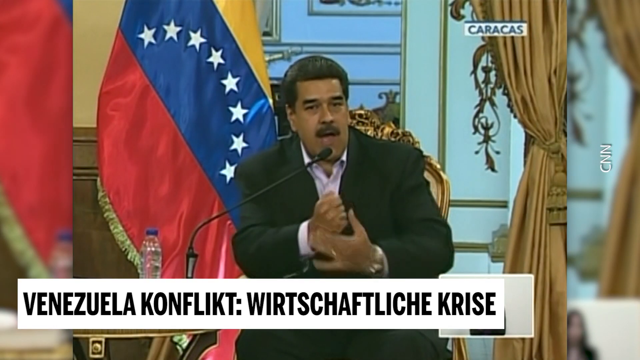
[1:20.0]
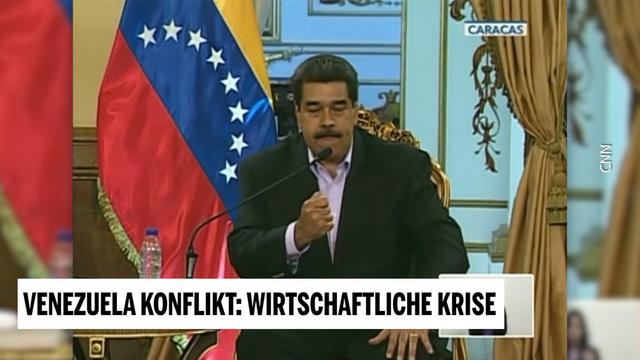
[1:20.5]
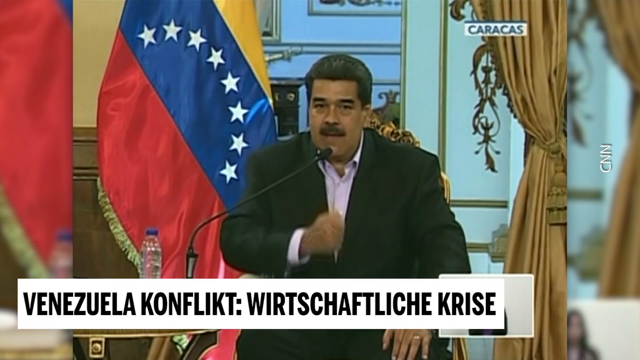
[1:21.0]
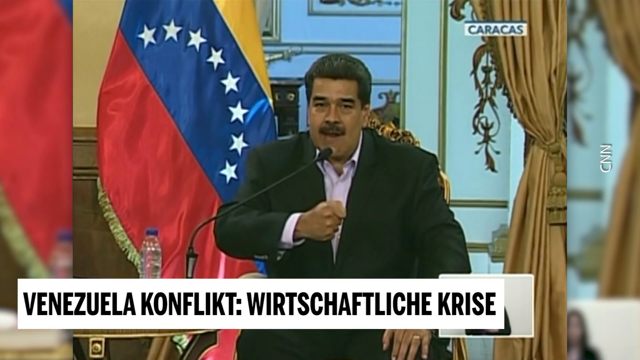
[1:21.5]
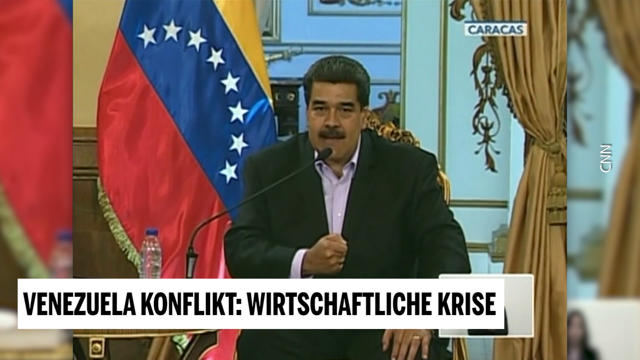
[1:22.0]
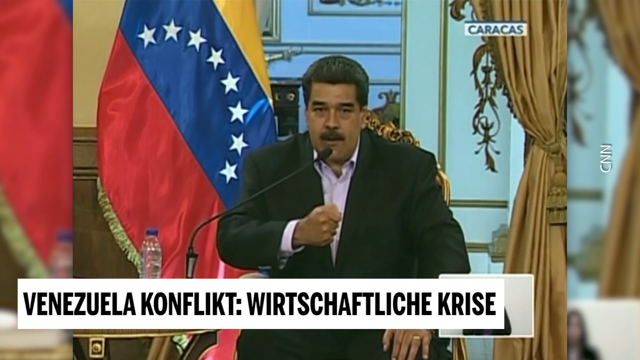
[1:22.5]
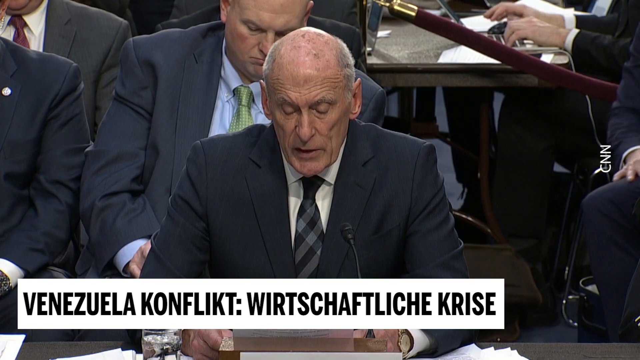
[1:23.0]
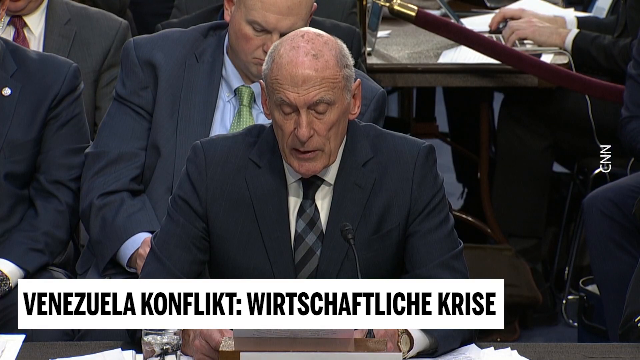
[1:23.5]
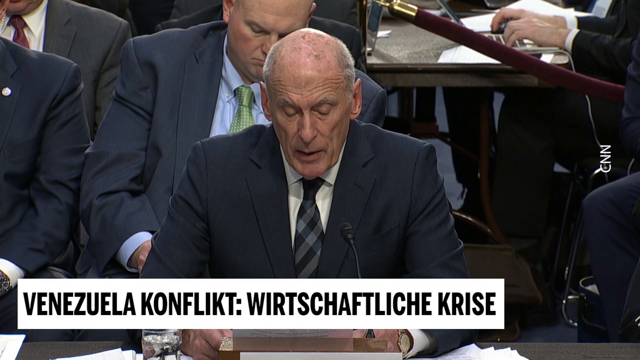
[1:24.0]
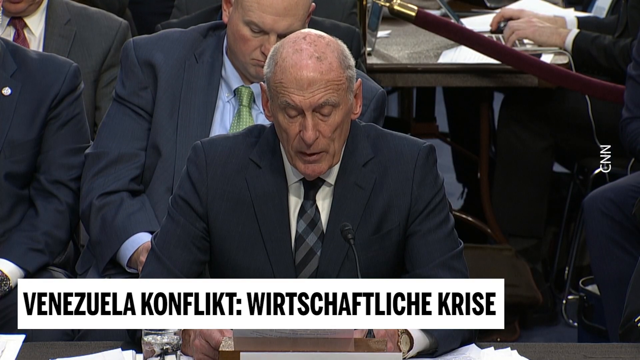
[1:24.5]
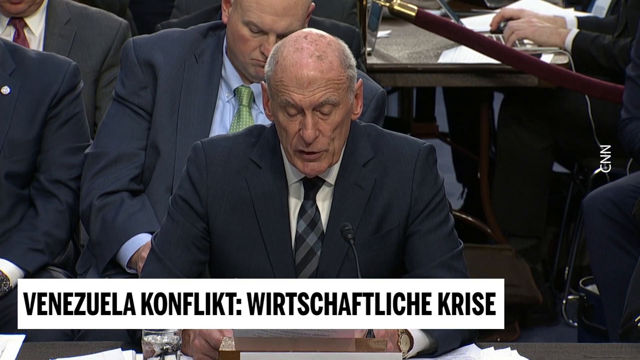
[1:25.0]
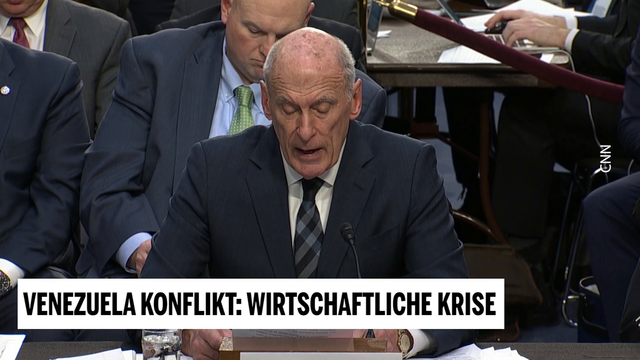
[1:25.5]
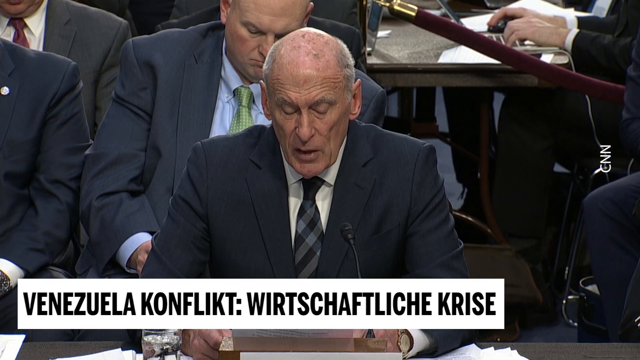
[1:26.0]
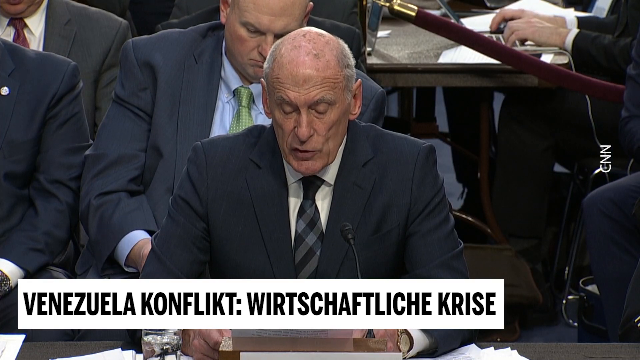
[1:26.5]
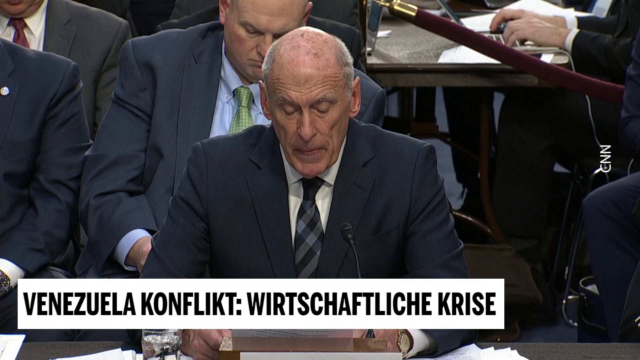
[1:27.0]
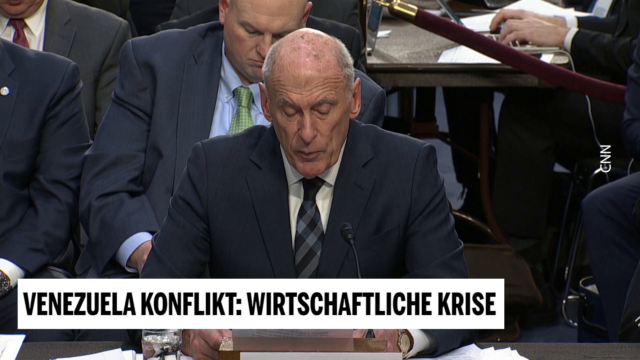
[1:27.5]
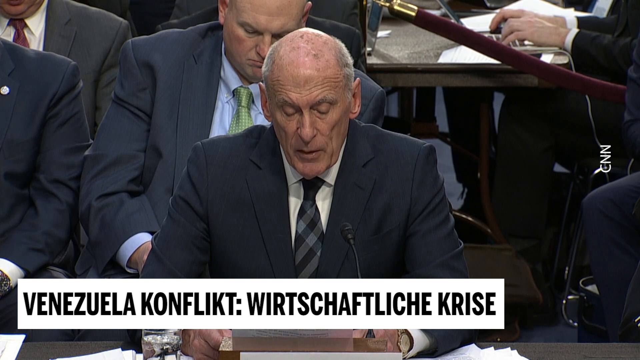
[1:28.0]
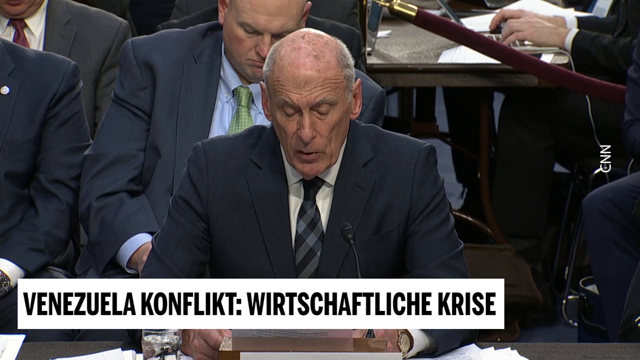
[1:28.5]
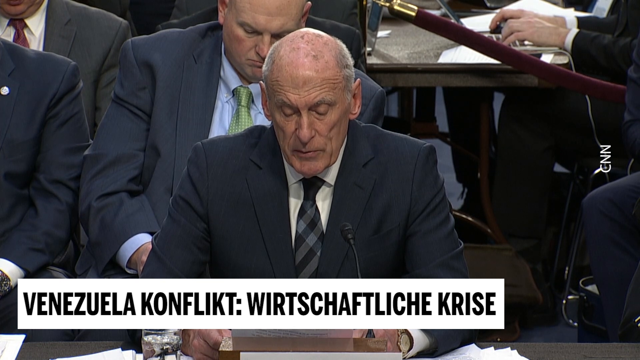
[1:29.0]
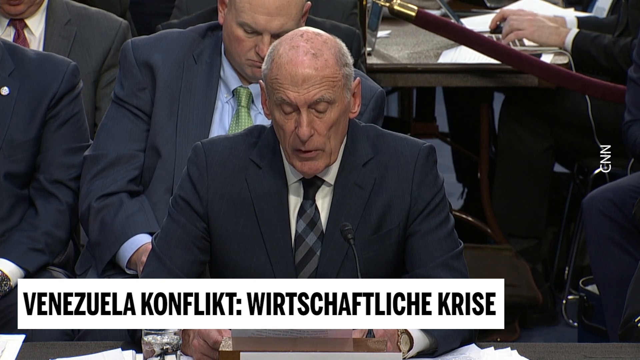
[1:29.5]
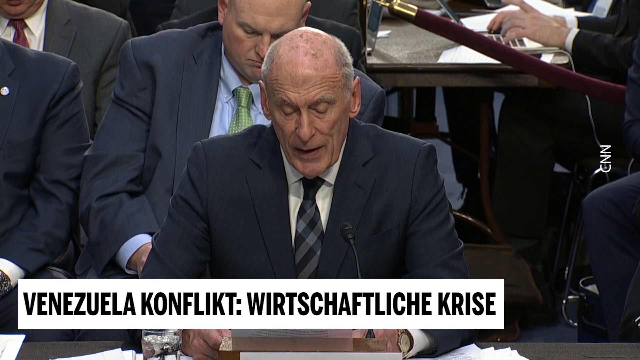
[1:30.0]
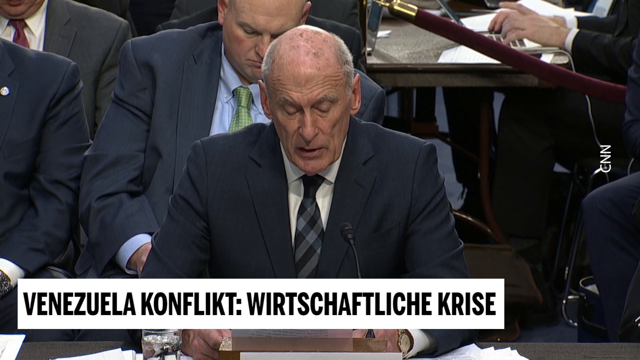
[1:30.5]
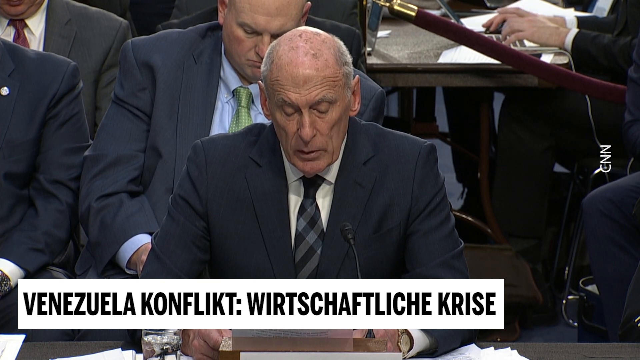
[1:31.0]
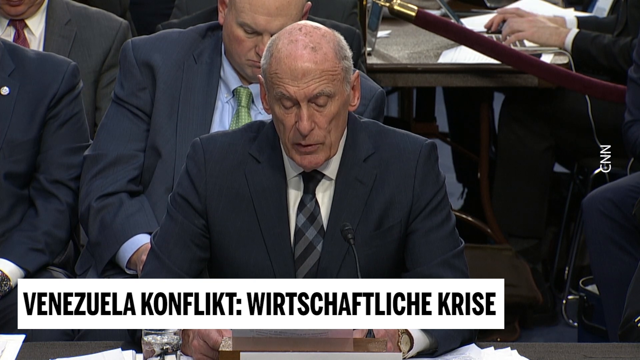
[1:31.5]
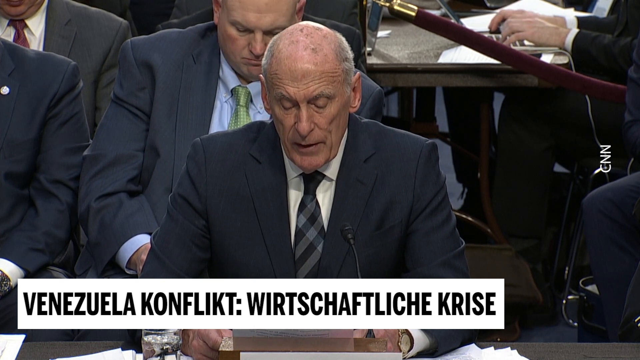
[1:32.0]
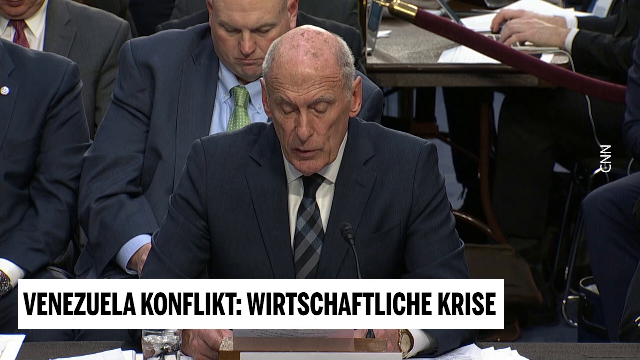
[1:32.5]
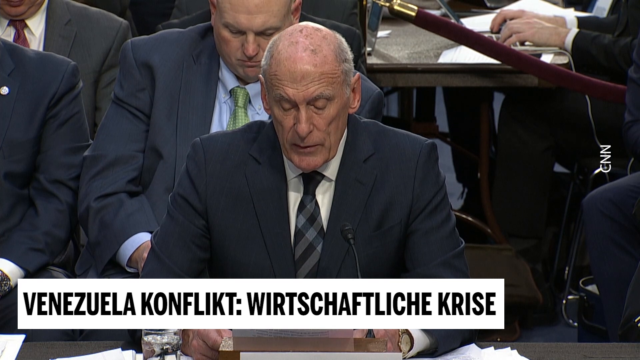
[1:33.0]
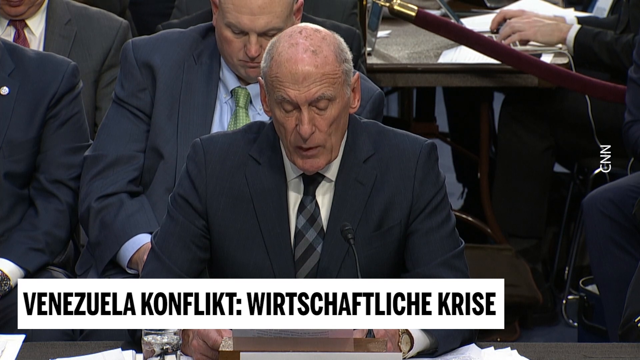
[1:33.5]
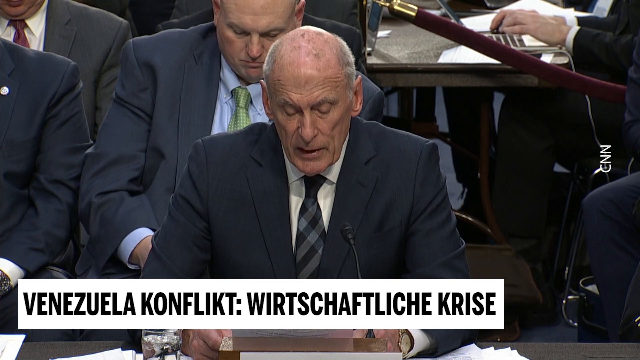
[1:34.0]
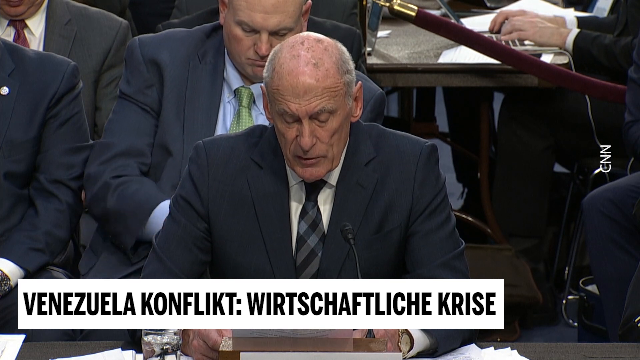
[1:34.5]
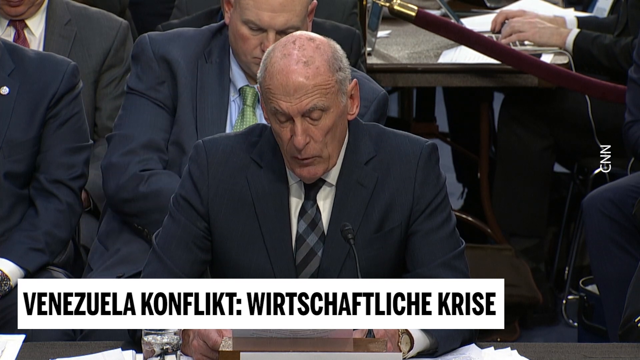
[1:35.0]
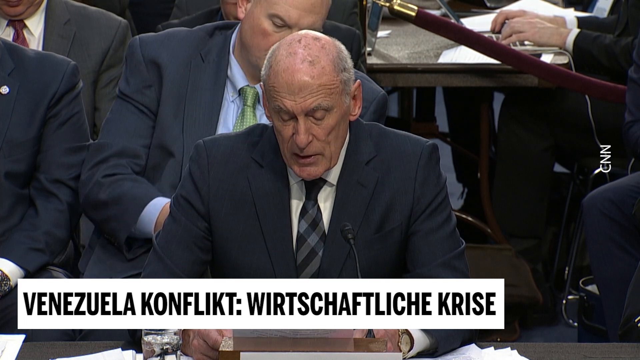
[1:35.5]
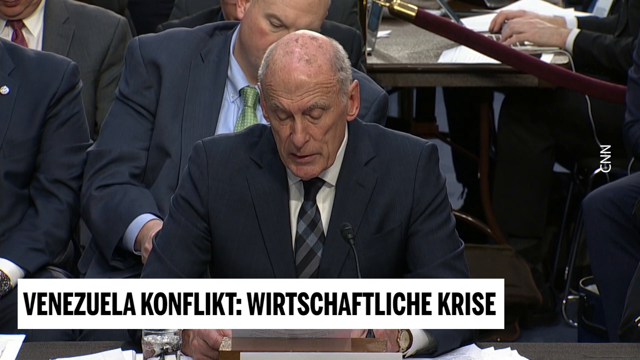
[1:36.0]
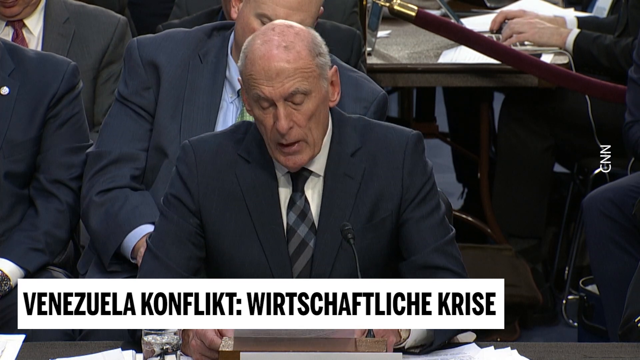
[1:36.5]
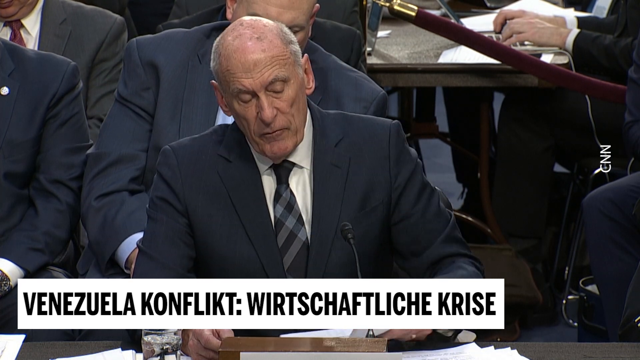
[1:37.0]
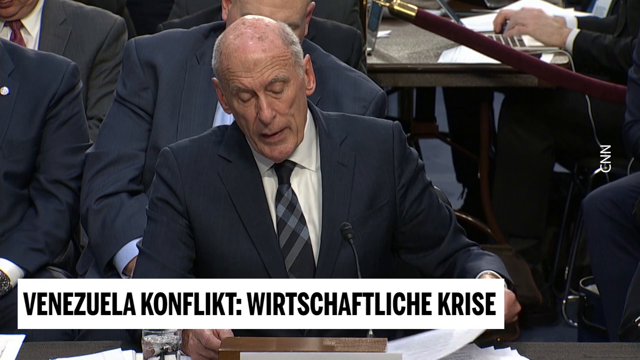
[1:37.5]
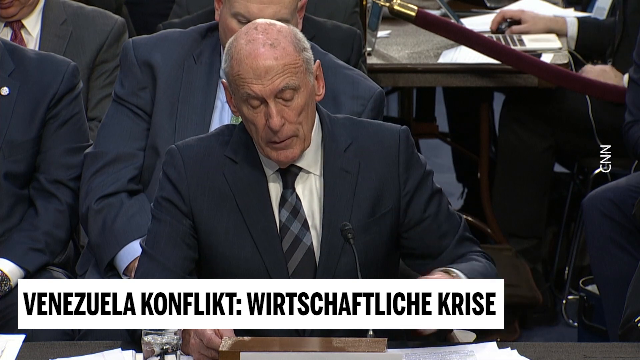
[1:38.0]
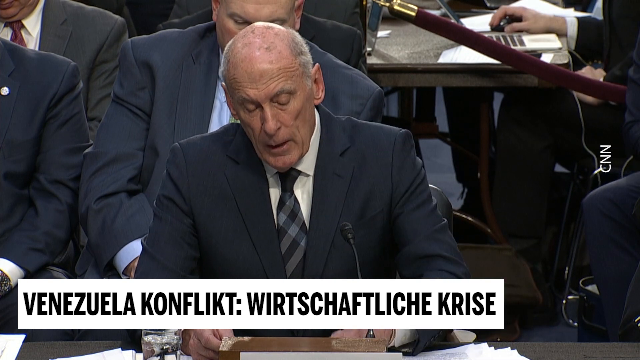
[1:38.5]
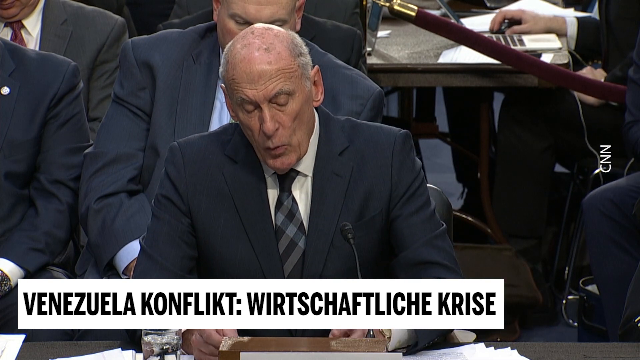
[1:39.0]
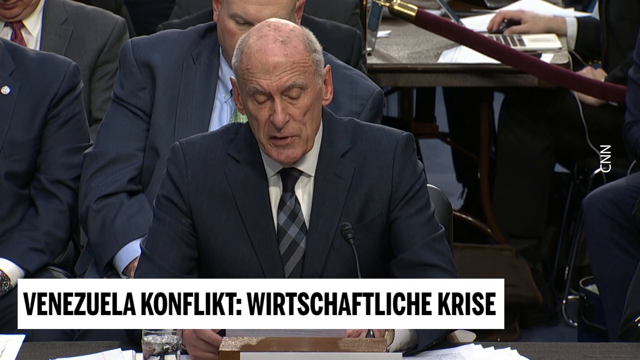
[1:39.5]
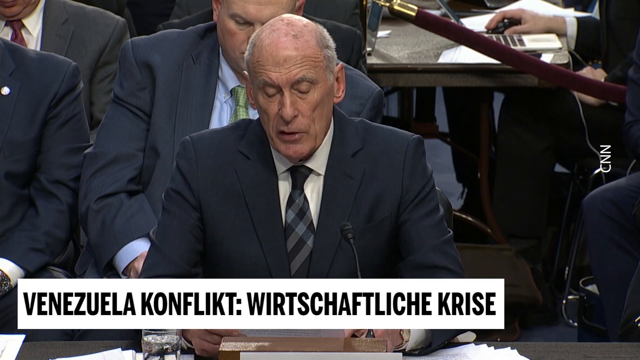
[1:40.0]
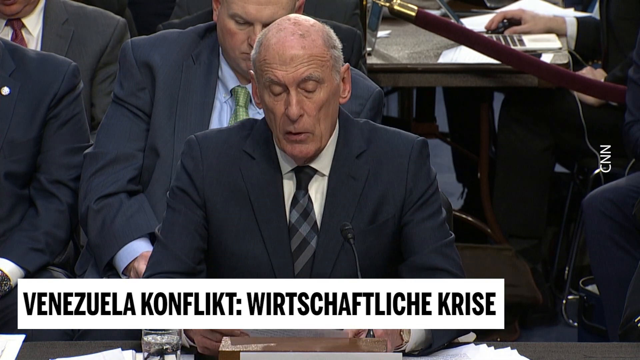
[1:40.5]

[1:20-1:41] President Maduro is seen speaking to his people. The video then switches to the white man with other men; he is the one speaking, wearing a black suit and a black and gray tie. He reads a paper and puts it to the side, seemingly finished with that page, and reads another one. Another person is typing on a laptop while looking in the other direction. The main speaker's head stays focused on the people. The men behind them are also wearing suits.